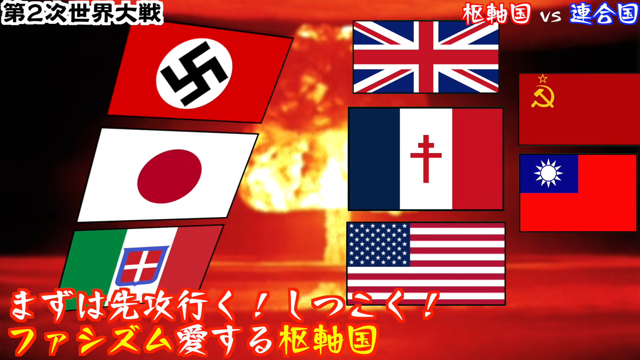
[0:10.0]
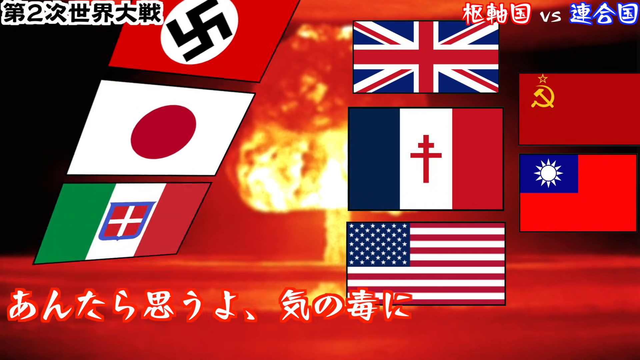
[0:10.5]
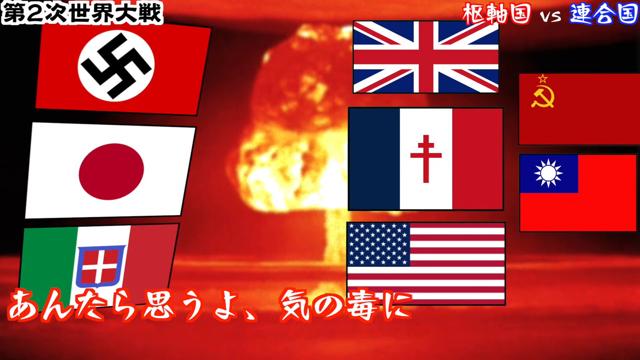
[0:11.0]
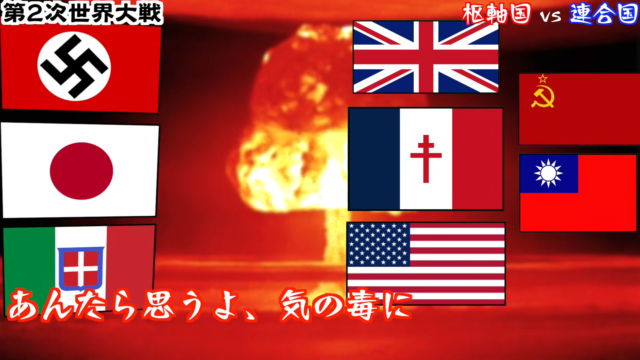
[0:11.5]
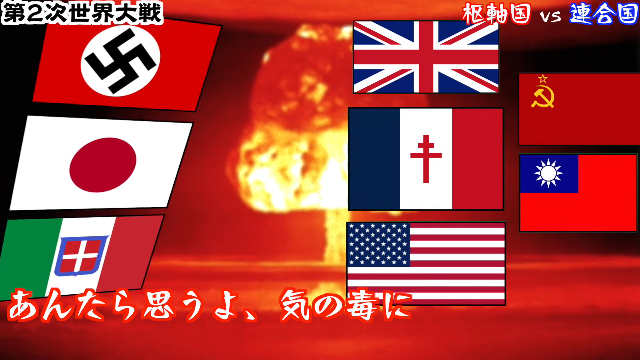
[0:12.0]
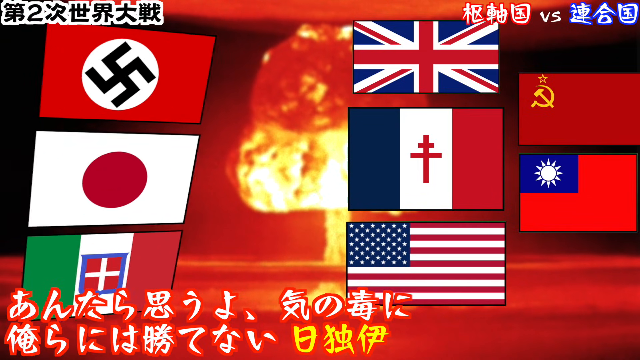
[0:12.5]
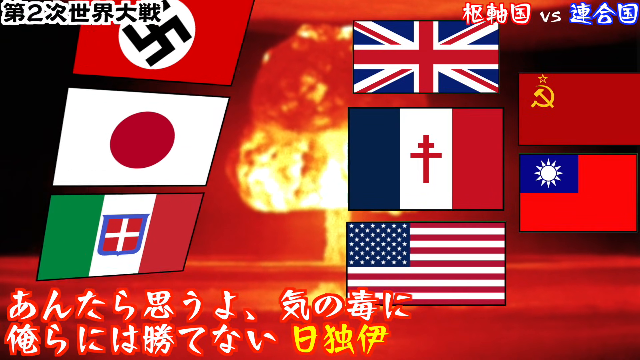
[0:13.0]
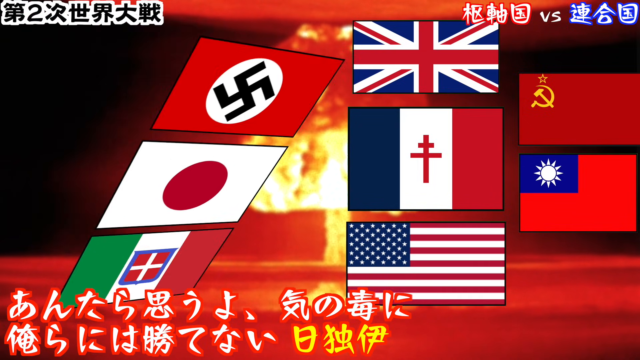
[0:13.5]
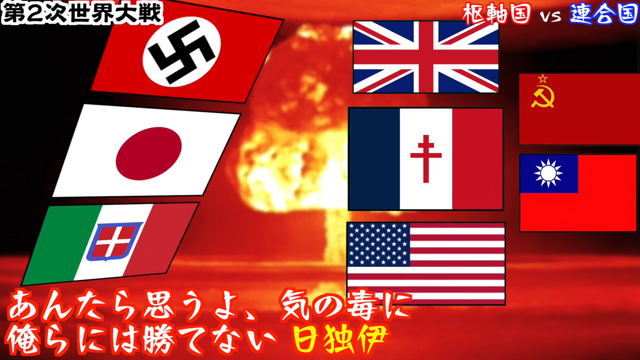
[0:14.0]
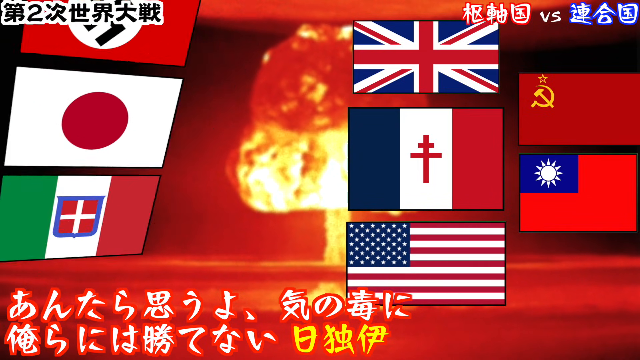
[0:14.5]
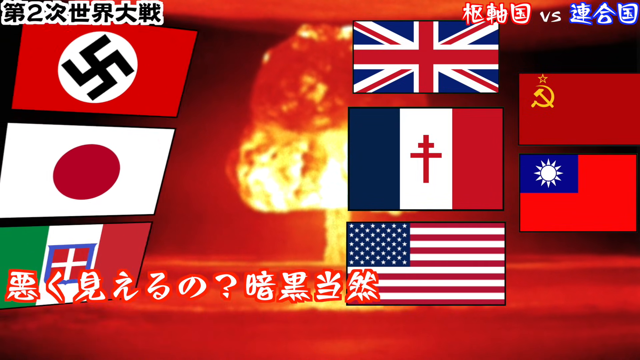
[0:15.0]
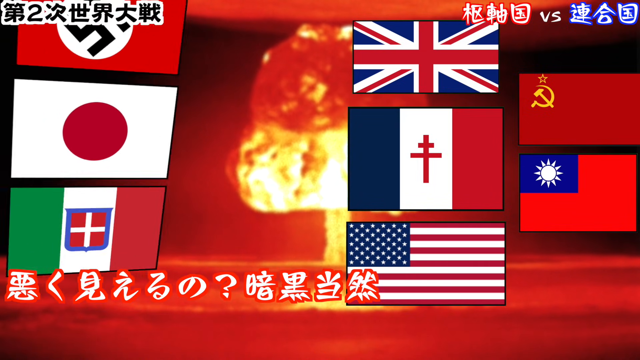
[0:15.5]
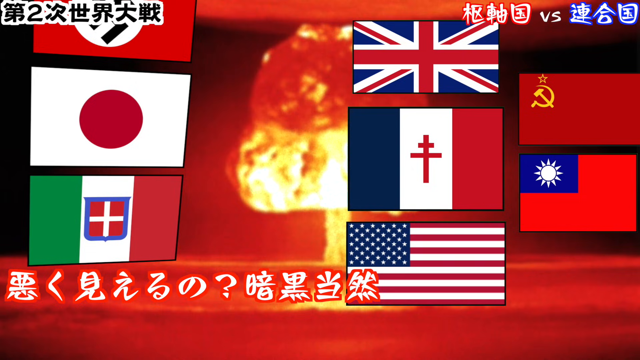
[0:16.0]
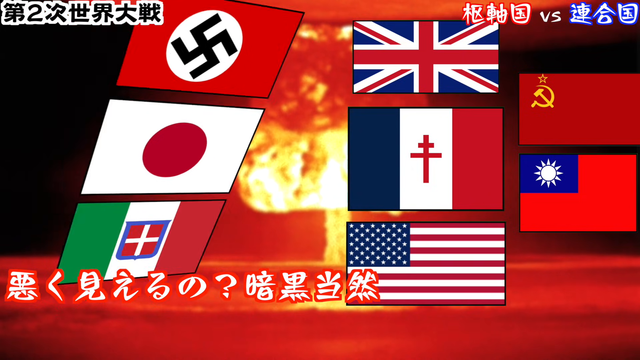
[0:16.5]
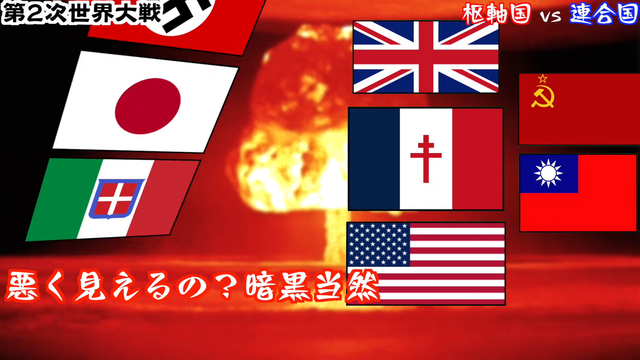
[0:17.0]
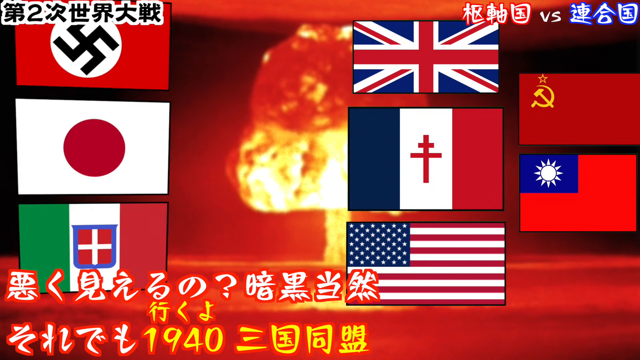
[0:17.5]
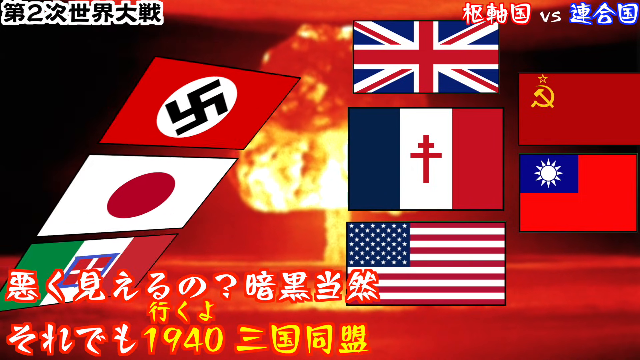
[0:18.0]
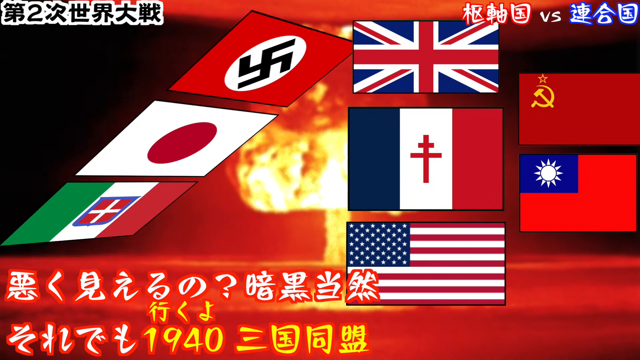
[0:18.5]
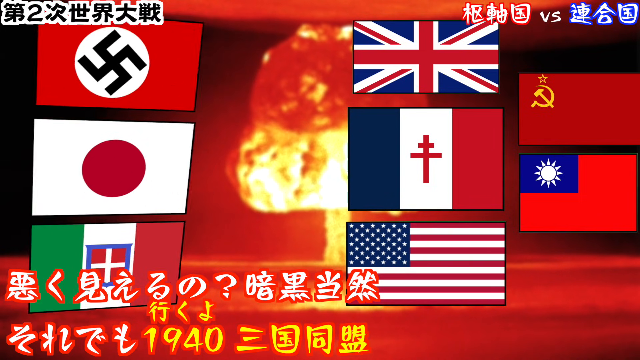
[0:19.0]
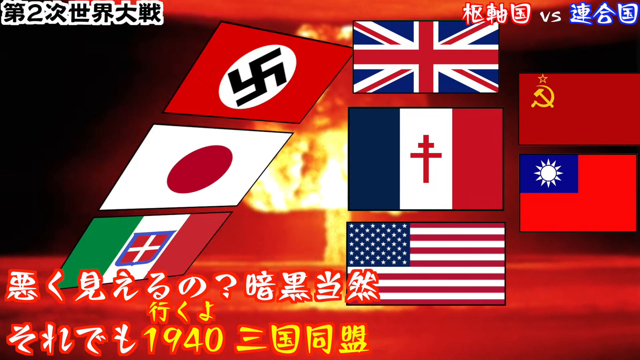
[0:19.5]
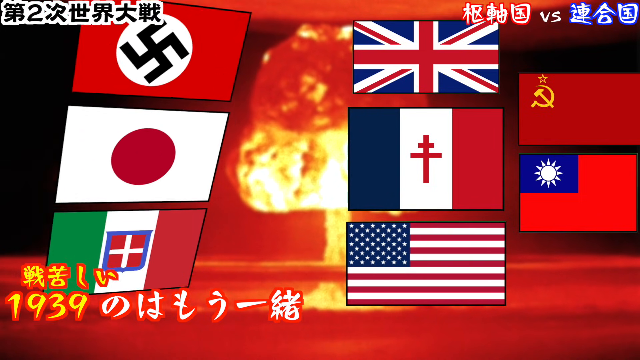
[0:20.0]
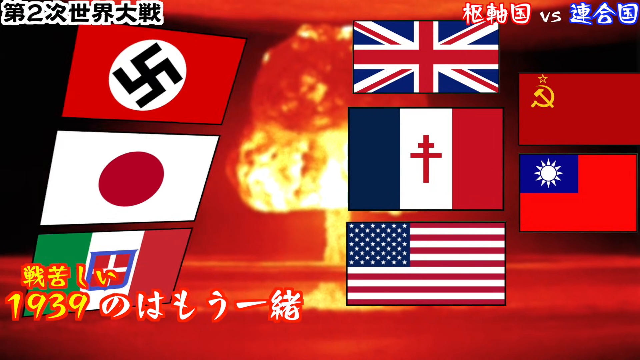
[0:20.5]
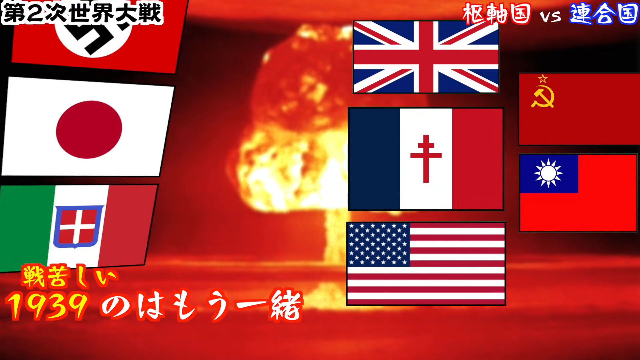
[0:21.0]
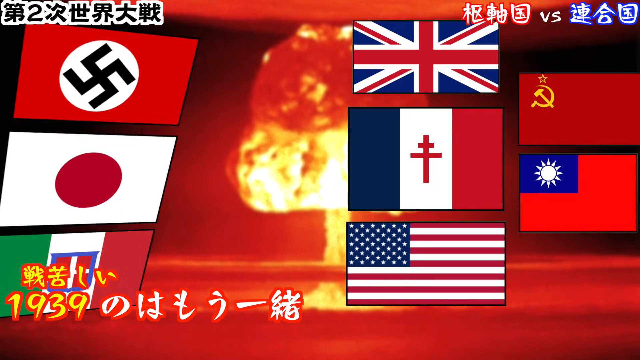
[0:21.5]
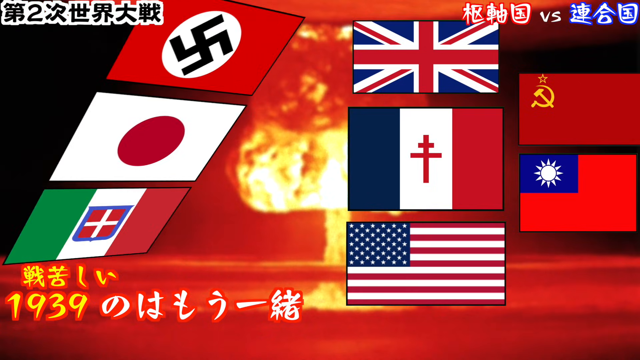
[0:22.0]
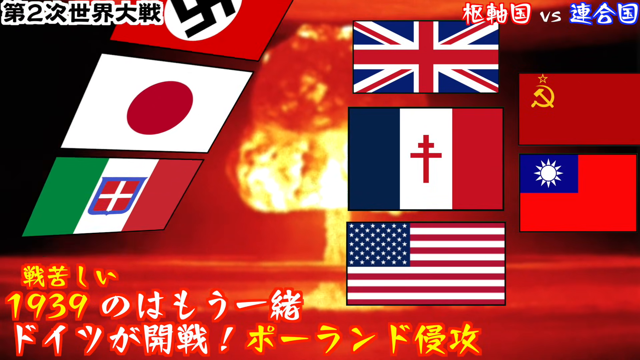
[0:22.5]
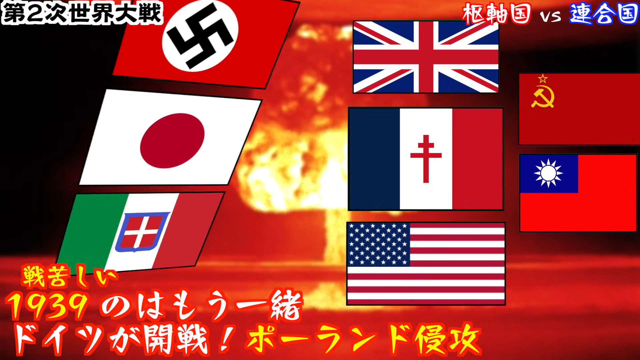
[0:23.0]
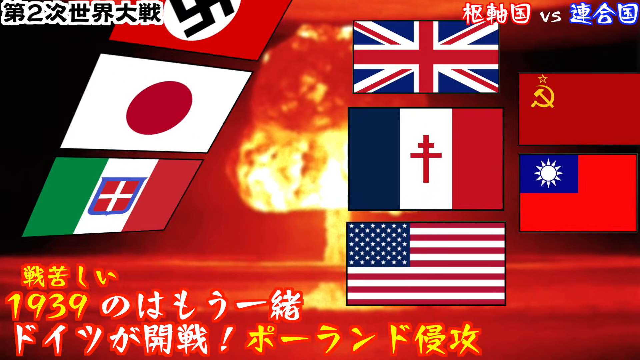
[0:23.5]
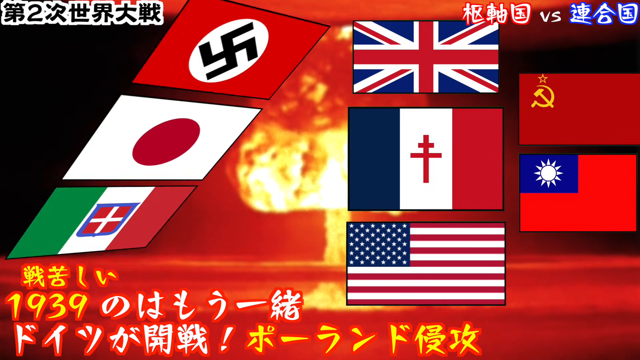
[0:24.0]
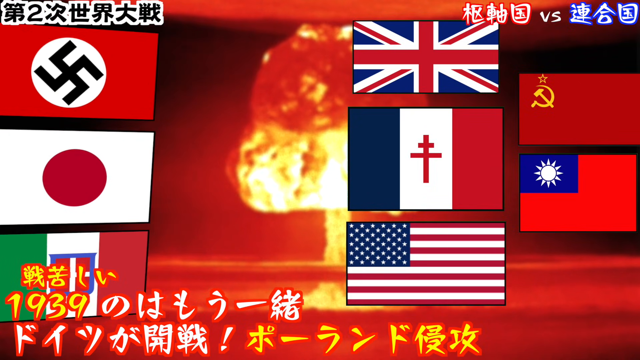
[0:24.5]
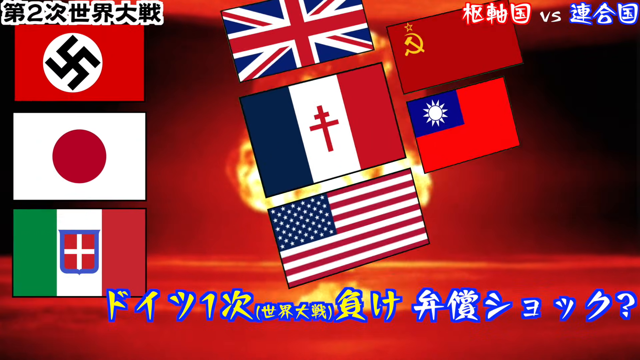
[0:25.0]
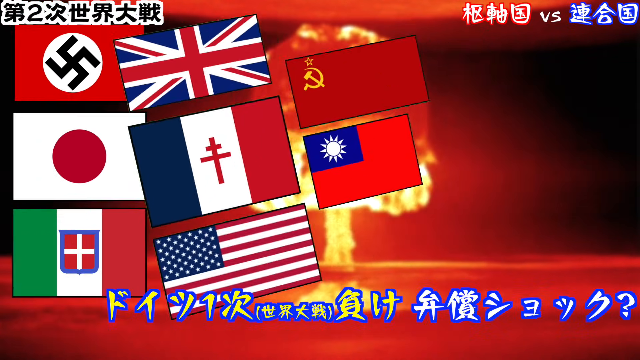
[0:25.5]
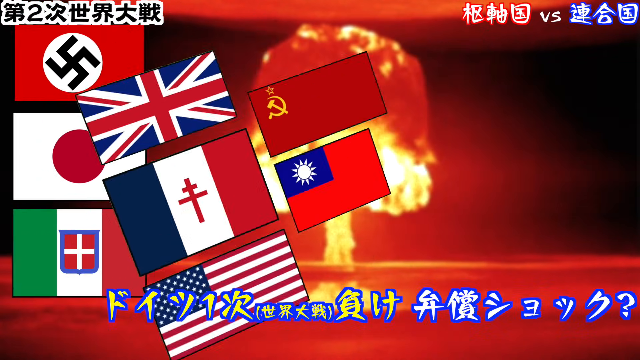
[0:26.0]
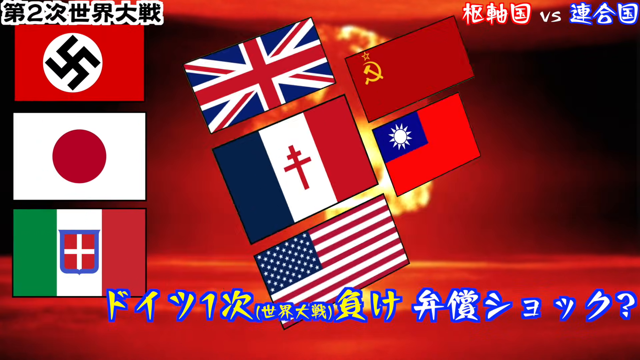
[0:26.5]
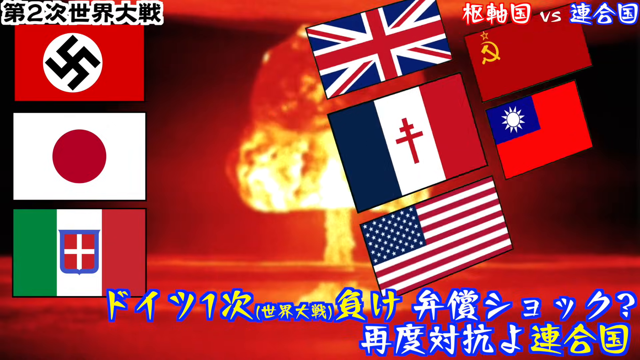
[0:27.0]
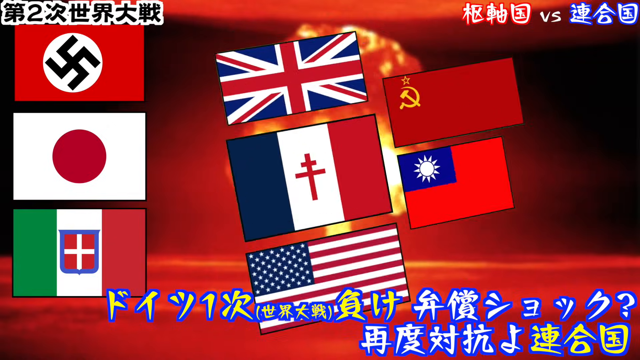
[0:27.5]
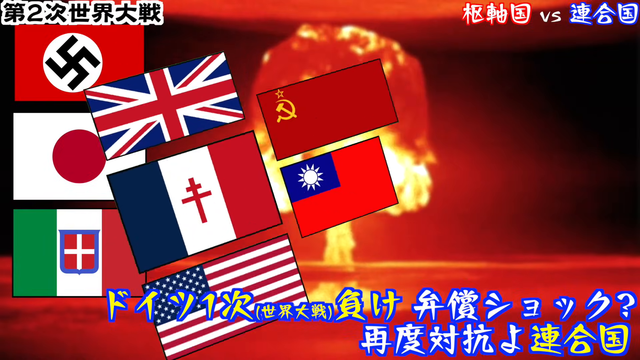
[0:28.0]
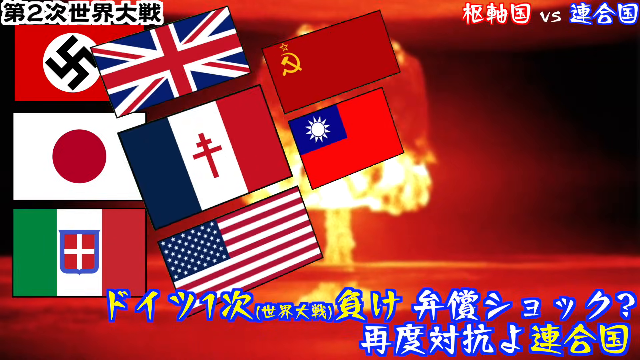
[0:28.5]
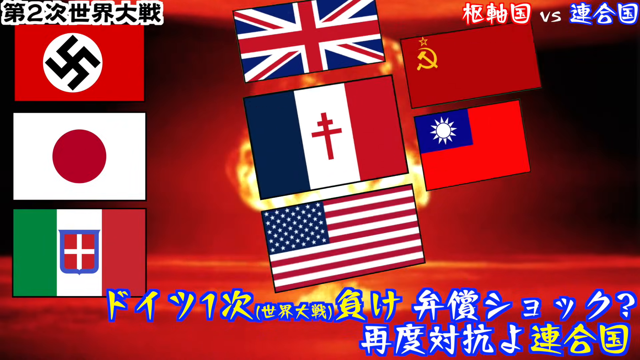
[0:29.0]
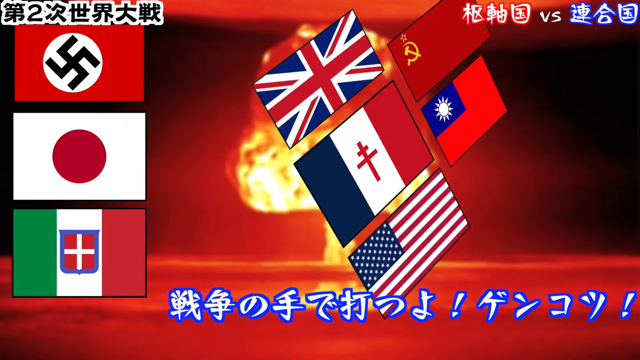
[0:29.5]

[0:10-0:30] About six to eight flags appear in this opening part. Among them are the flag of the USA and the flag of Great Britain or the United Kingdom, and one seems to be the Korean or South Korean flag. The other three or four flags are not identified.